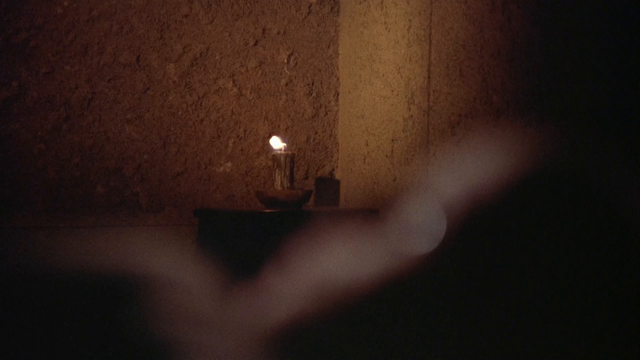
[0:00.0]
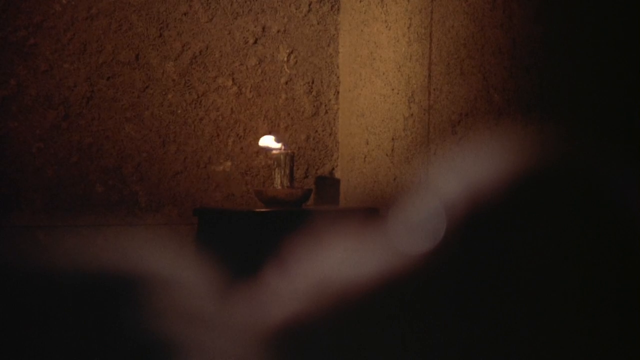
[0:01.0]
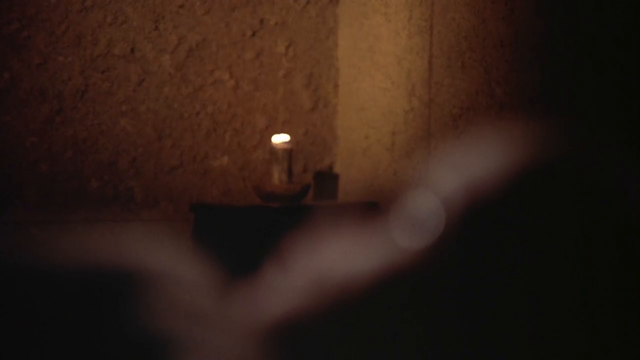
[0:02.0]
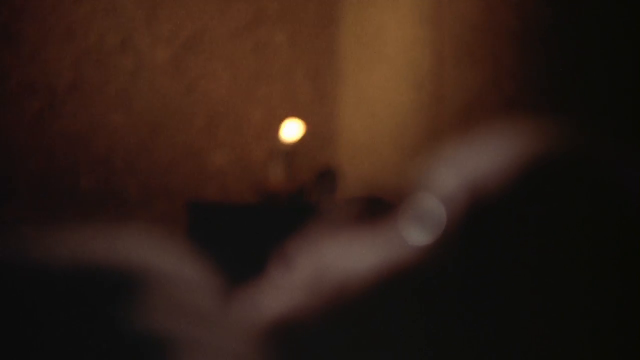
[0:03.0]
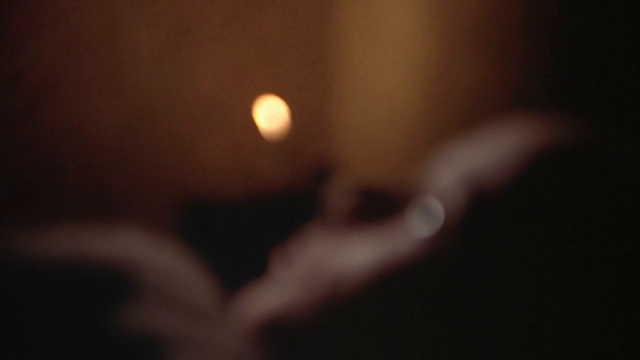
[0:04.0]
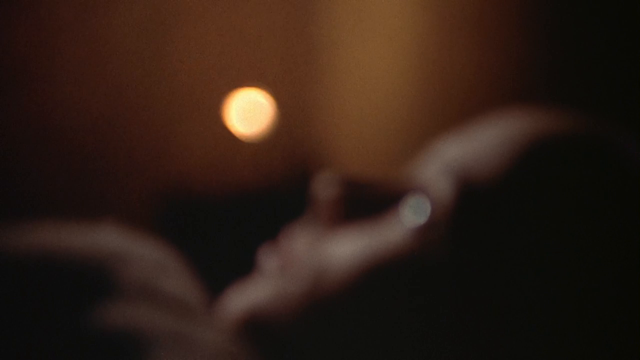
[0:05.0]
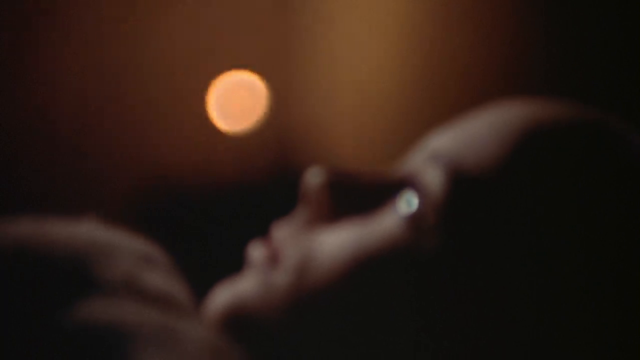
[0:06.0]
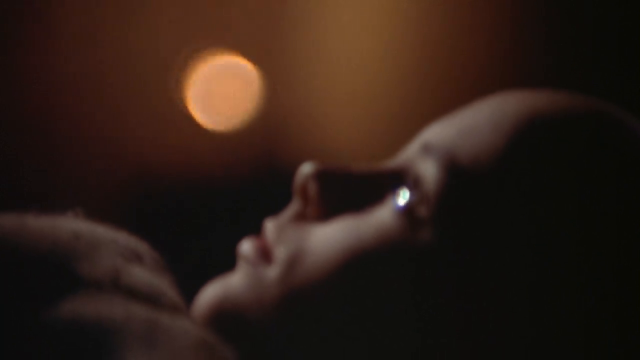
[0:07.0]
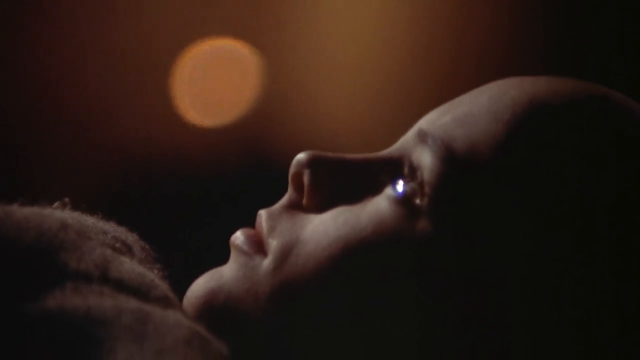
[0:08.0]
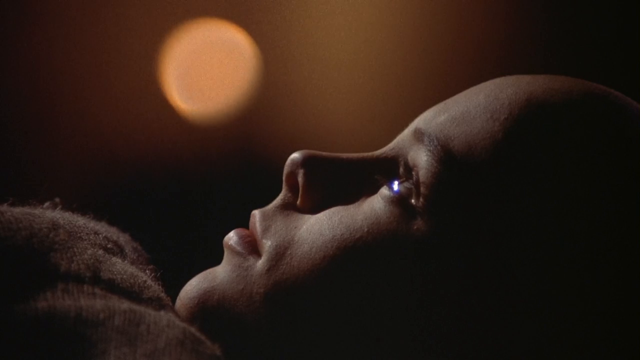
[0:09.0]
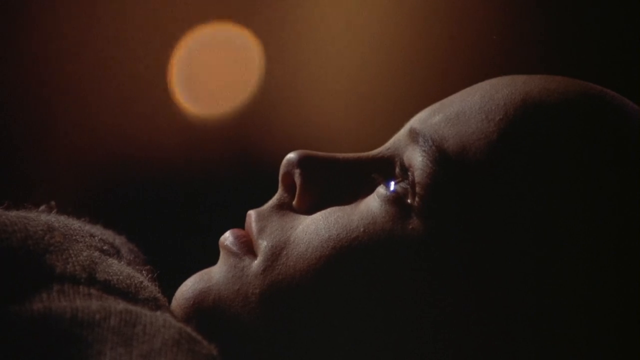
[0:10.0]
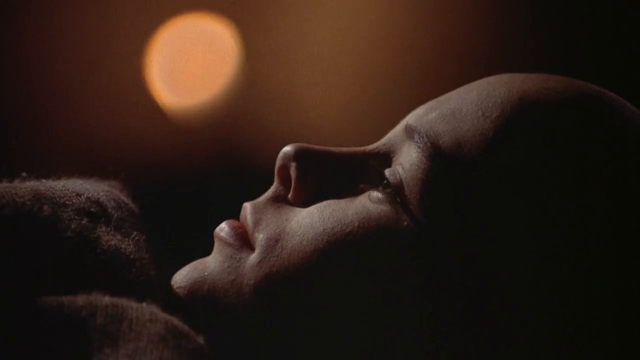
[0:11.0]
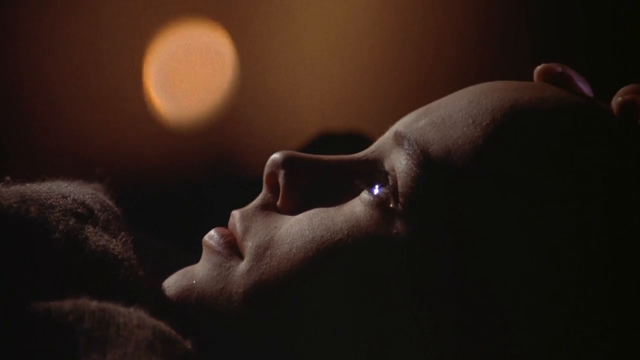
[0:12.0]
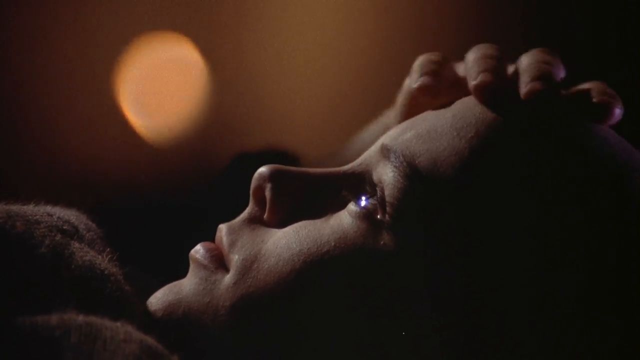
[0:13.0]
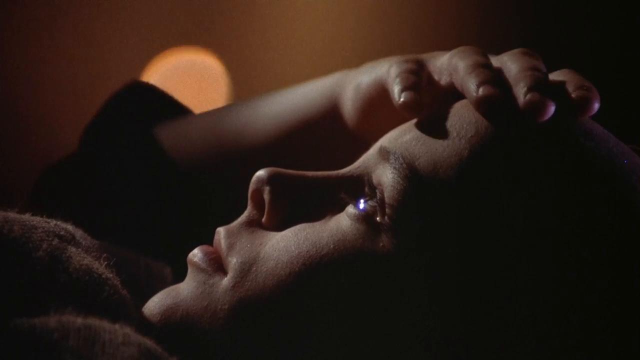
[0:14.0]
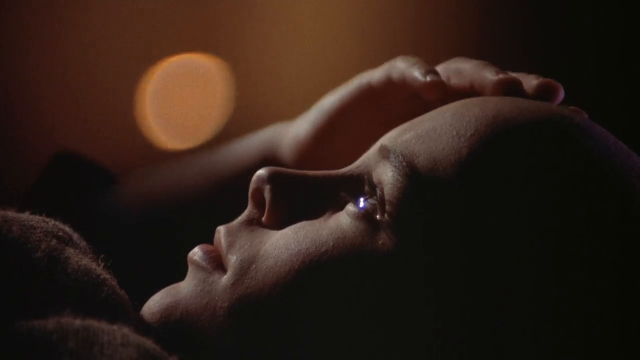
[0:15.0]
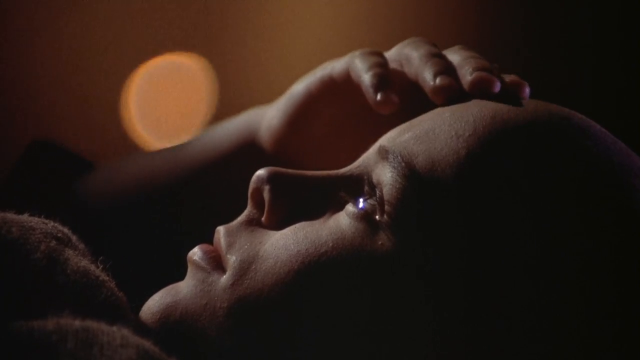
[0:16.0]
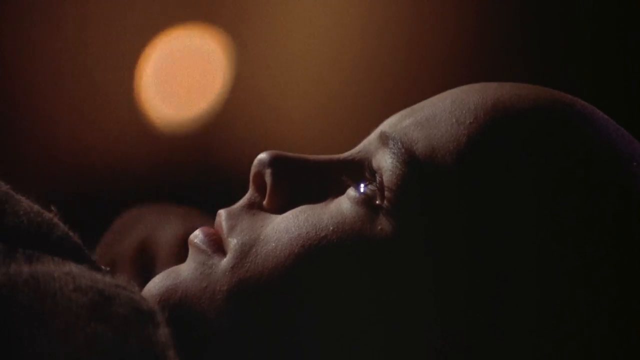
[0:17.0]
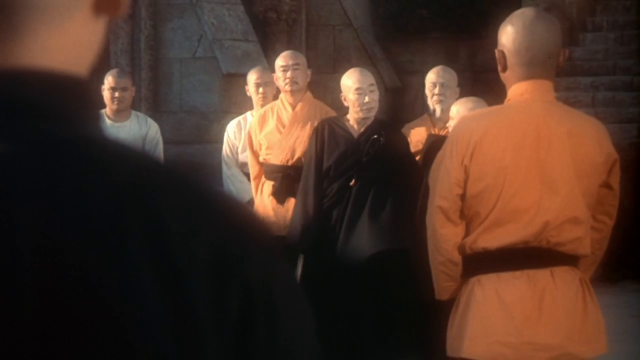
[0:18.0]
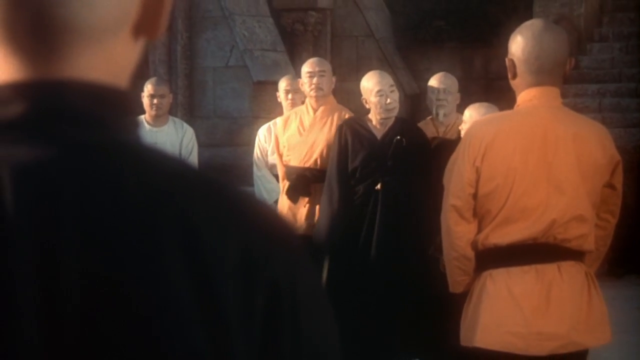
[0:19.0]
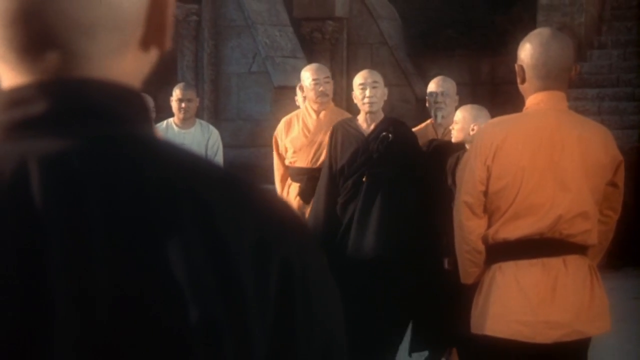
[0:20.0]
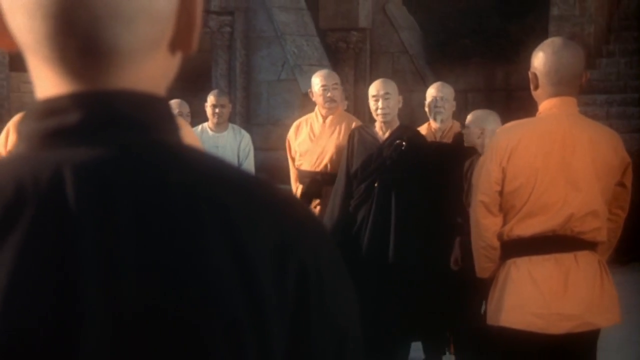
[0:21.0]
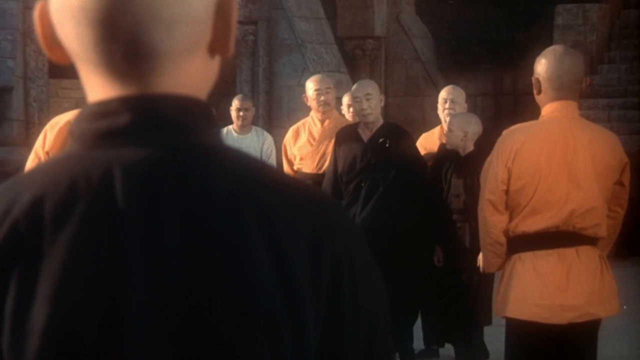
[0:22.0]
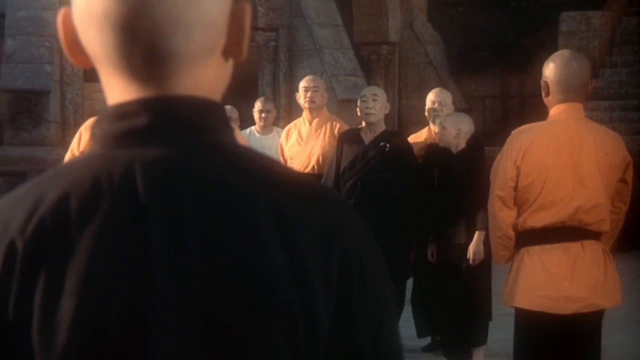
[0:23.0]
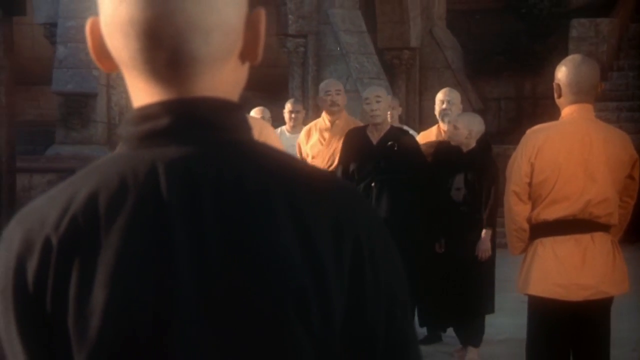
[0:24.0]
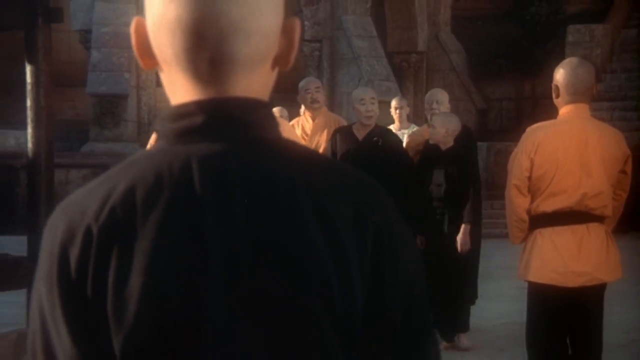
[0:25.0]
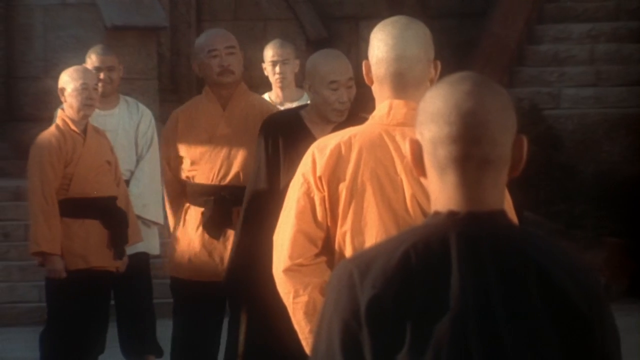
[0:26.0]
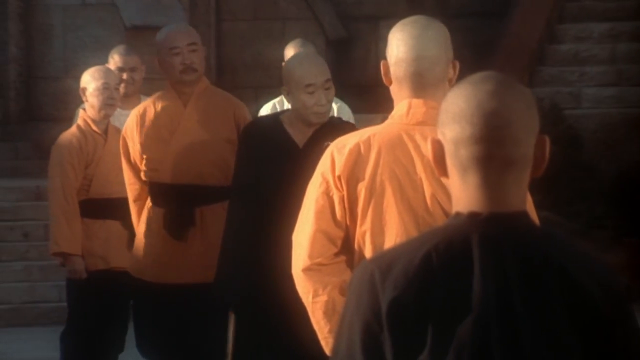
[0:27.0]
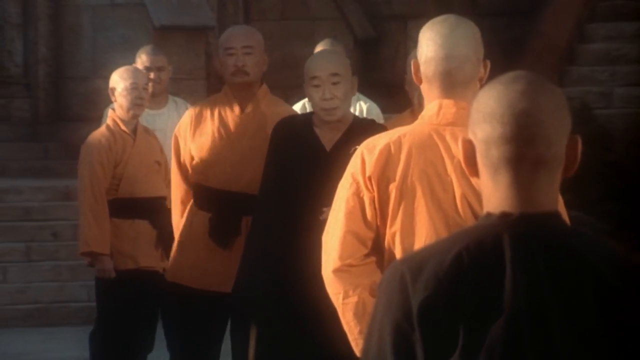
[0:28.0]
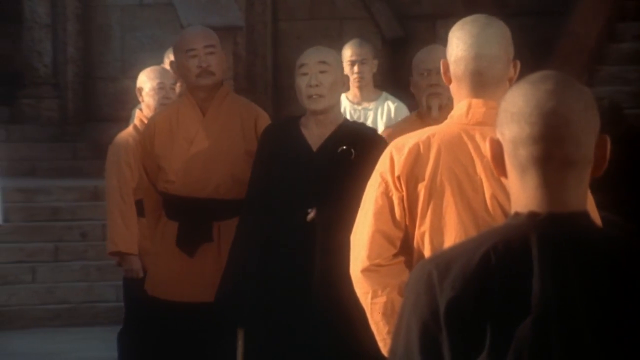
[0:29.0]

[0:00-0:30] In the background, a lit candle swings gently from left to right in the wind, and the wall behind it is full of marks of stone. The camera then focuses on a person in the foreground, leaving the candle blurred behind. The person is bald, which suggests some sort of relation to Shaolin monks, and is young. They are covered by a warm blanket, their lips tightly shut, and they look upwards as if trying to sleep while thinking about something, perhaps about their day. Their hand gently caresses their bald head. The scene then cuts to a memory of them surrounded by other Shaolin monks; most of the monks wear orange suits, except one who wears a black one.